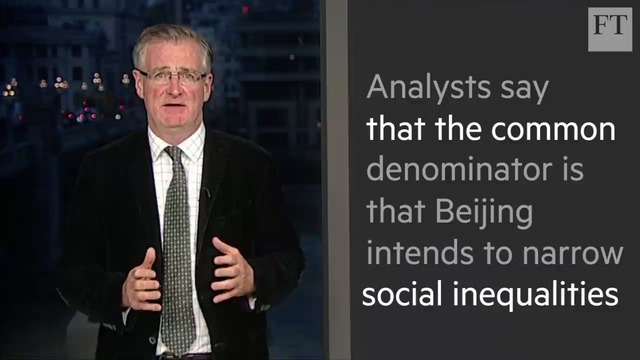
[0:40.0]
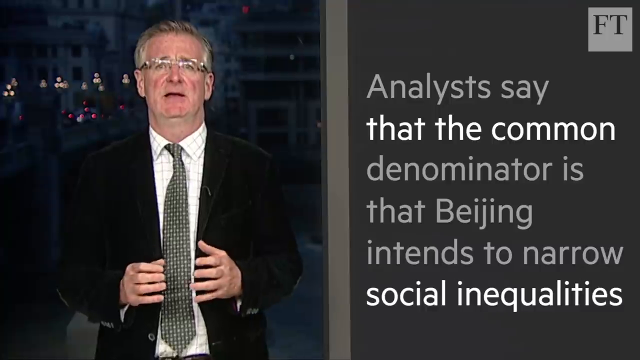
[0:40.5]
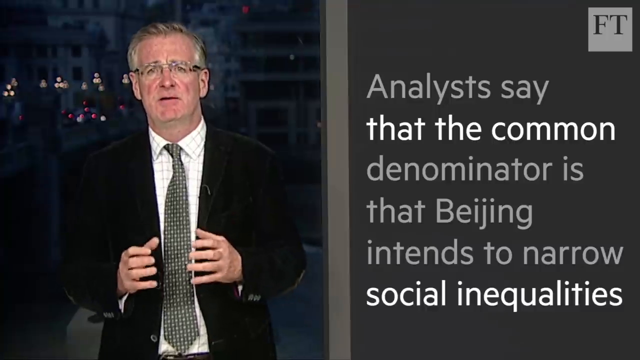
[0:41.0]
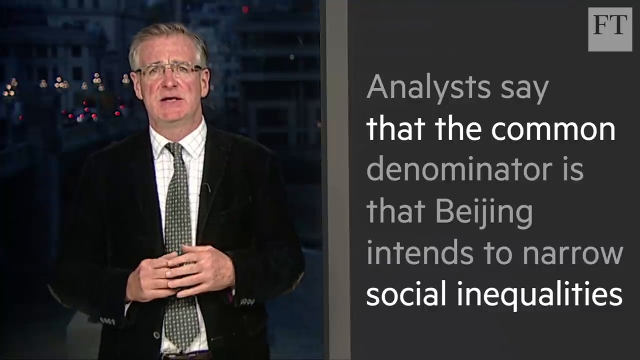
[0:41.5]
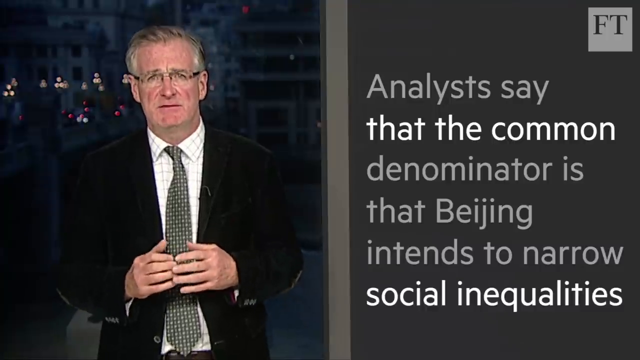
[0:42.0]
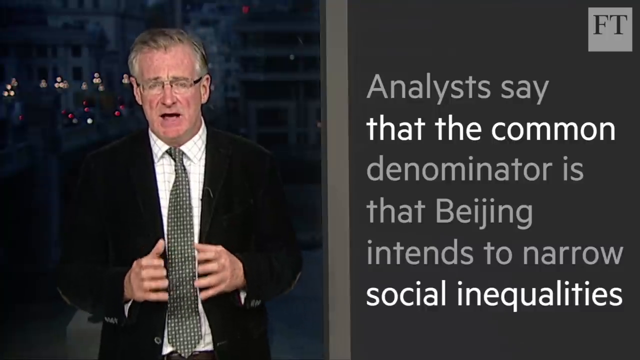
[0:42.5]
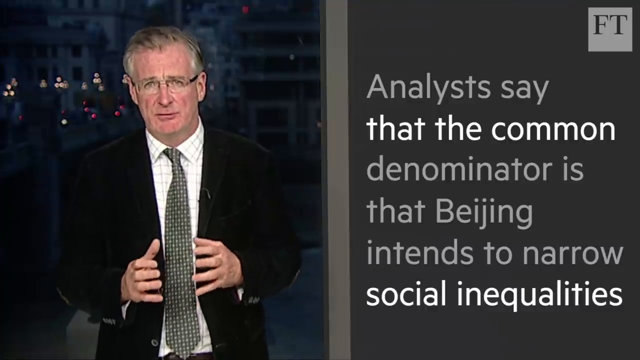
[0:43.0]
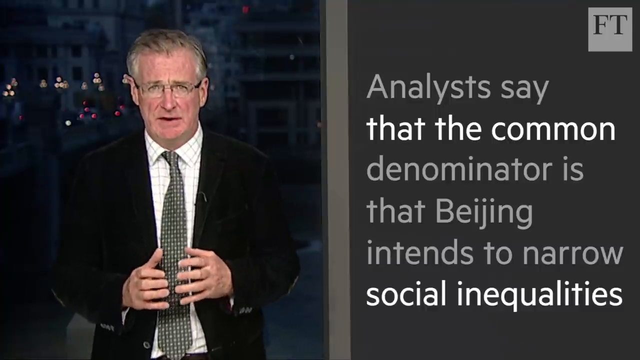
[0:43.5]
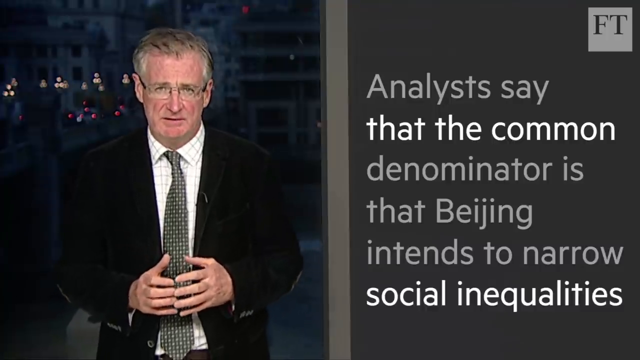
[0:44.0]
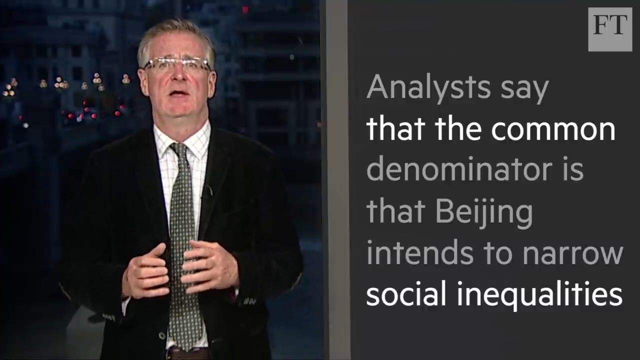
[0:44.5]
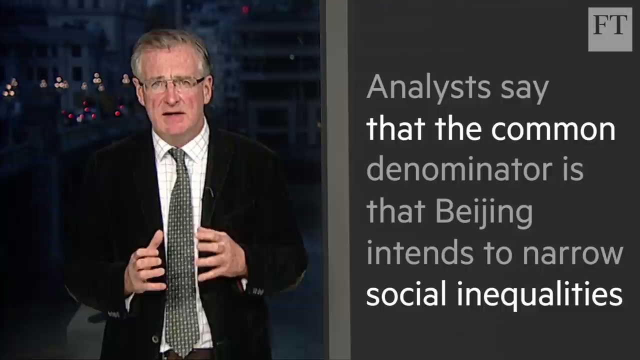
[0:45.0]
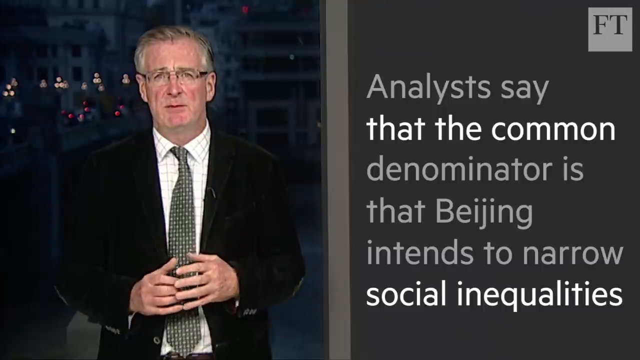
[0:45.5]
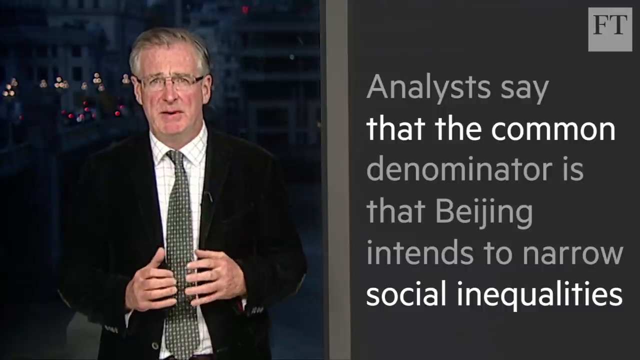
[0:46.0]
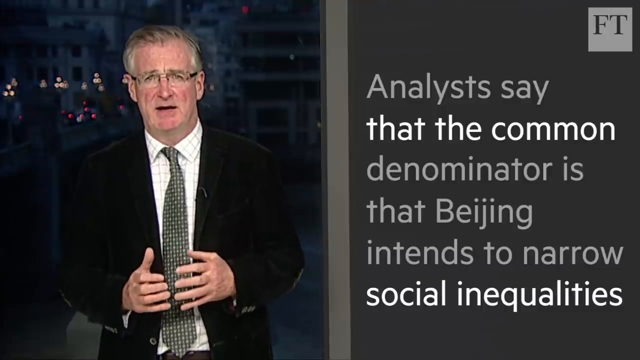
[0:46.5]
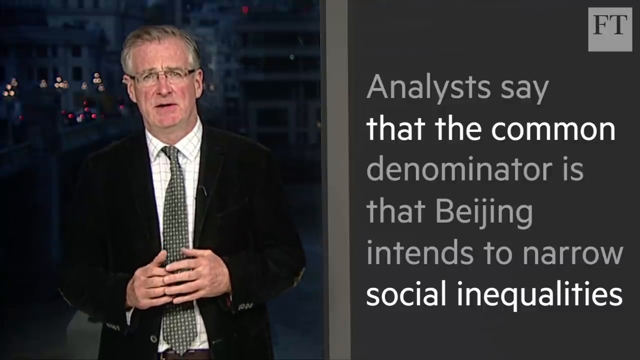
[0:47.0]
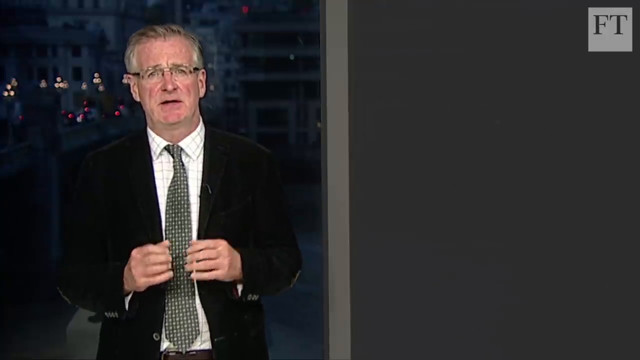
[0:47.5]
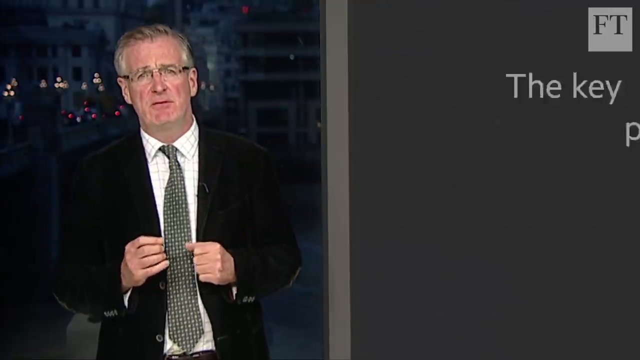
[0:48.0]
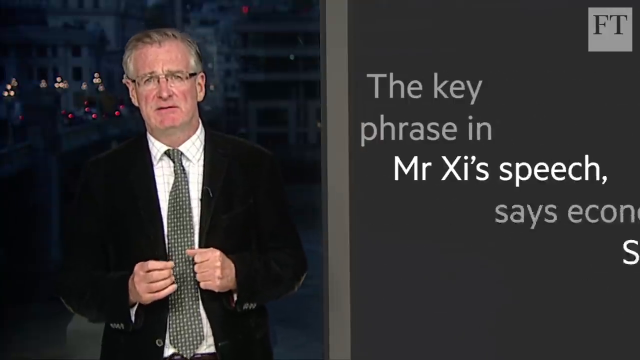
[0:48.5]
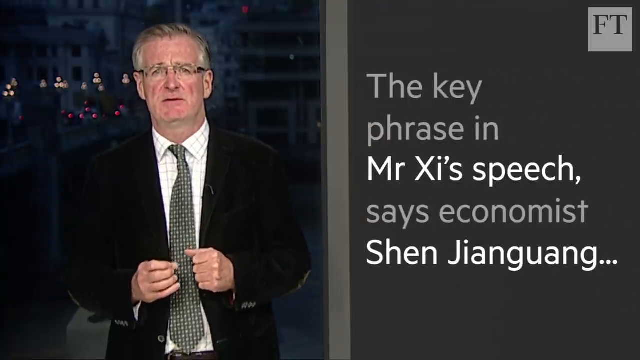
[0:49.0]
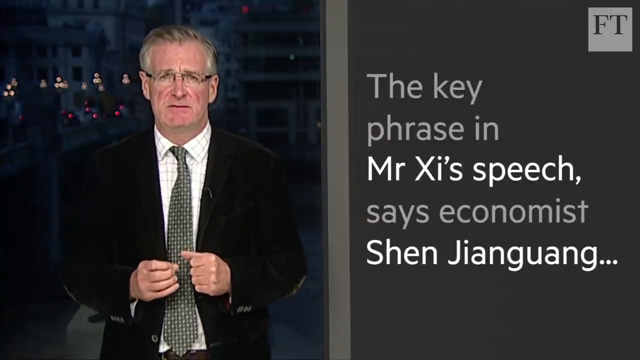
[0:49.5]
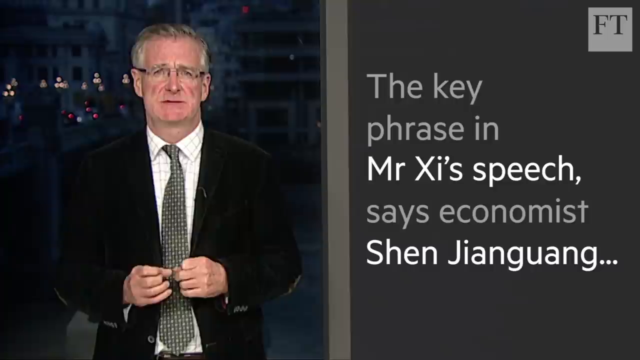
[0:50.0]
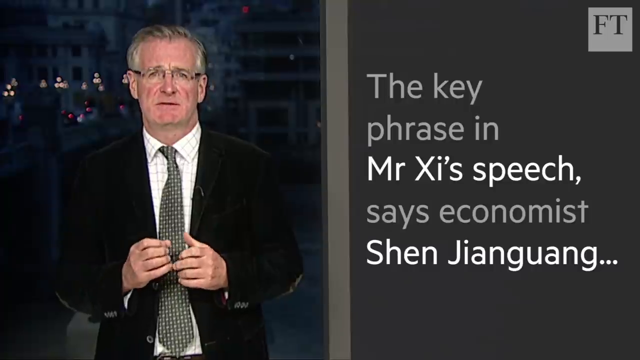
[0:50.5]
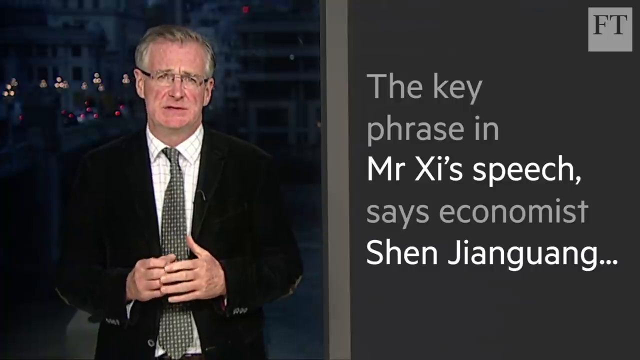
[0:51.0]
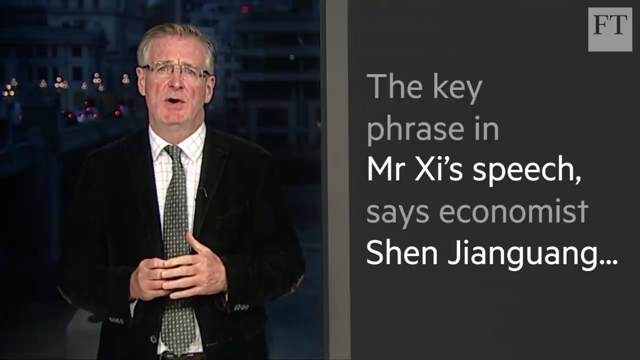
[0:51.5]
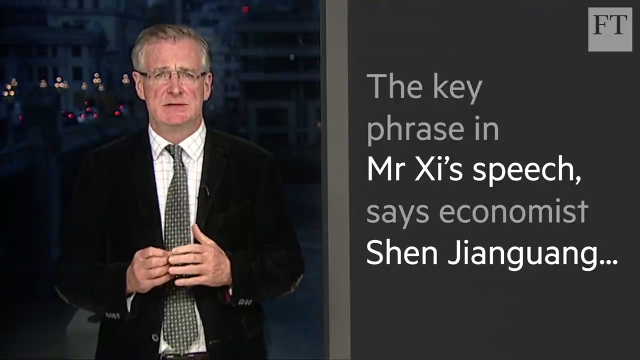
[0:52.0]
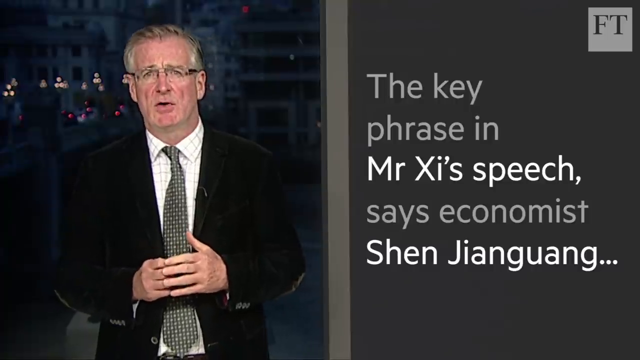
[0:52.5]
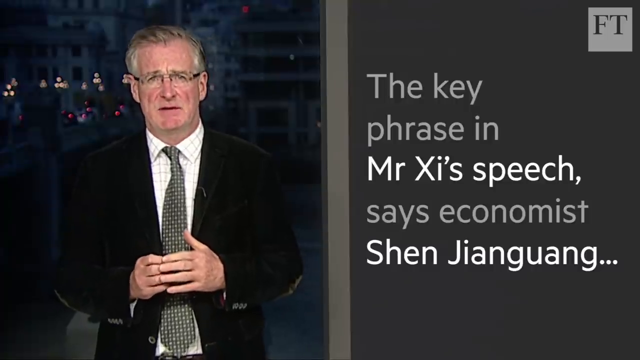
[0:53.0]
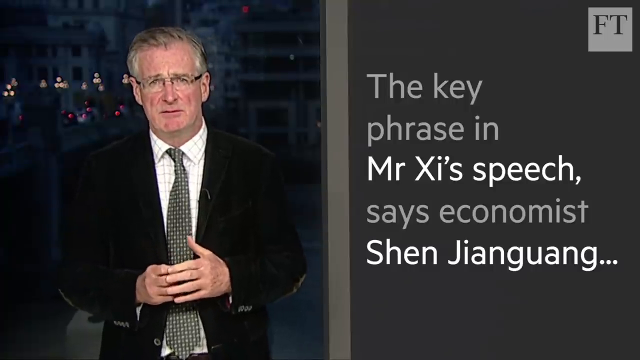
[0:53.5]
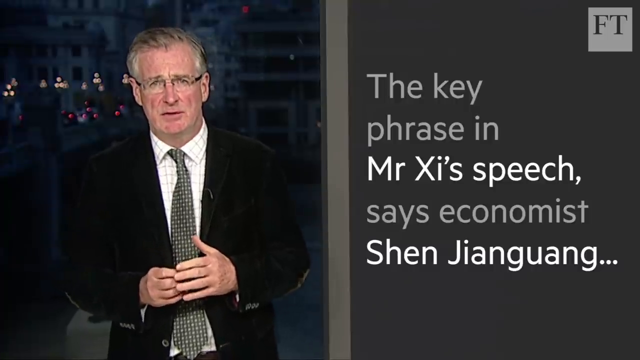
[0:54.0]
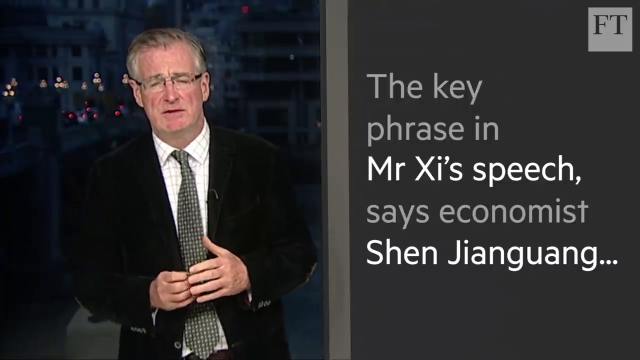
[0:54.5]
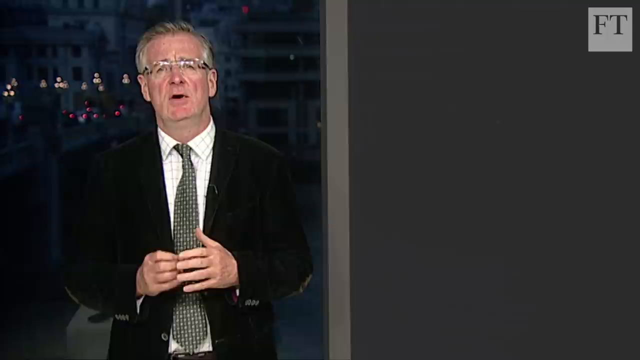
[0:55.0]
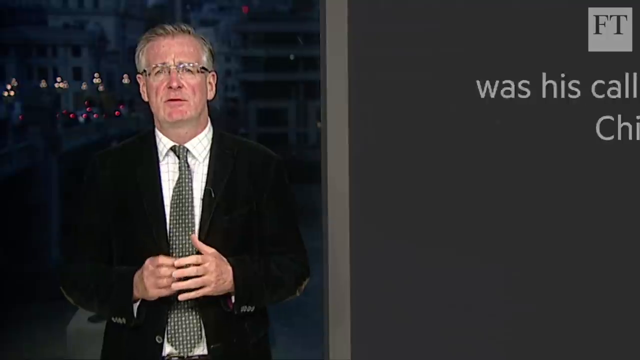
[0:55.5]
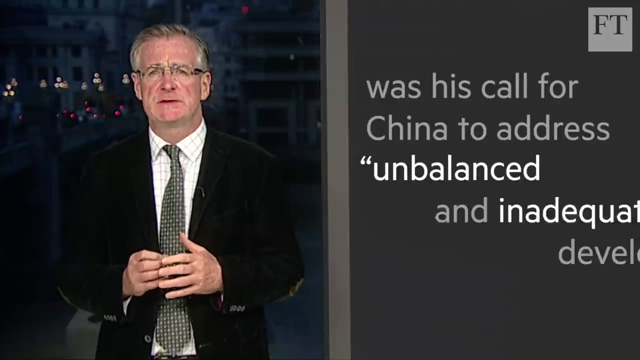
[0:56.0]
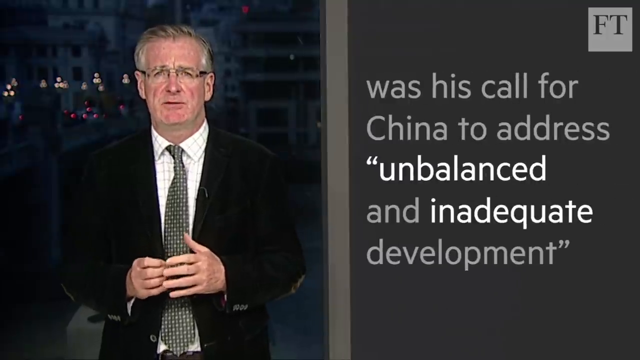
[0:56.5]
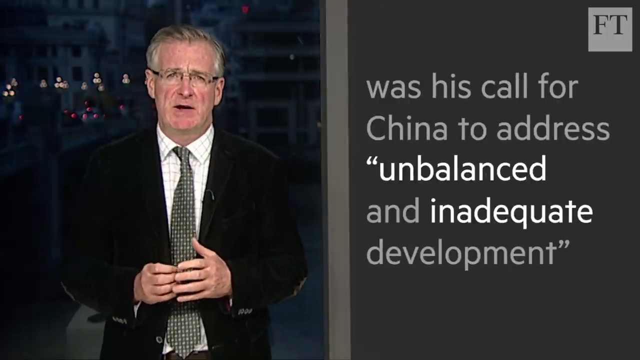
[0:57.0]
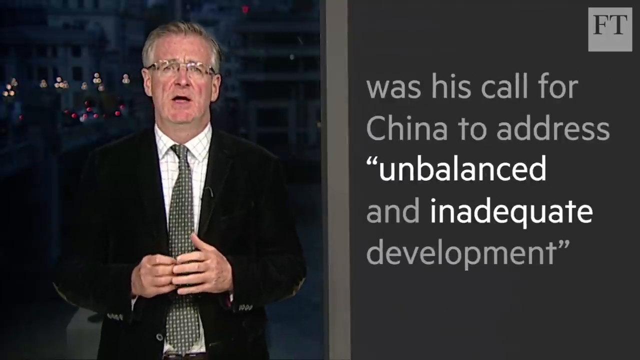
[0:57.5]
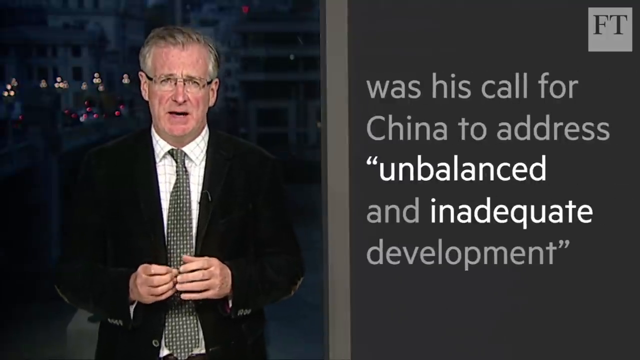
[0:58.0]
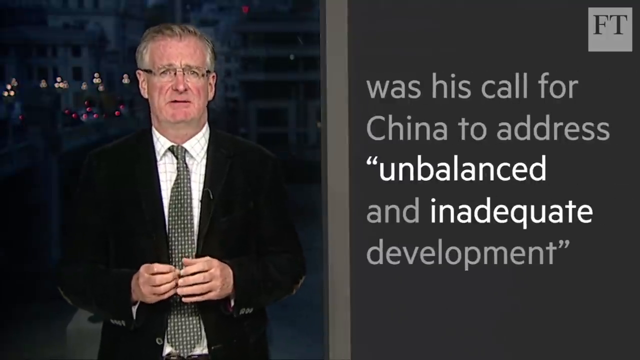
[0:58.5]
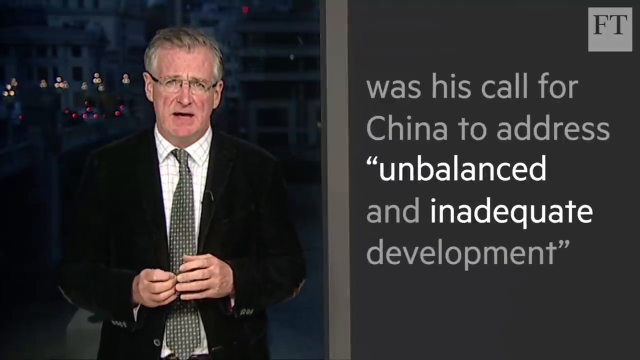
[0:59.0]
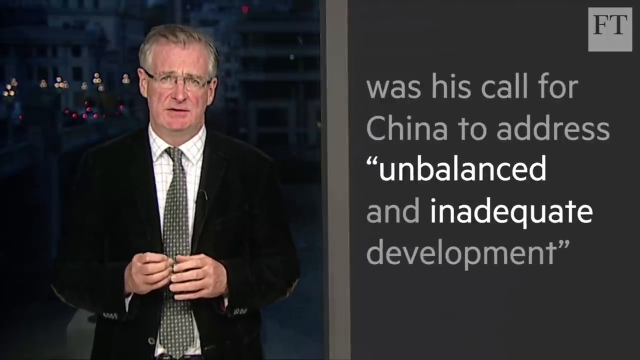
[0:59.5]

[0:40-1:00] The speaker stands on the left-hand side of the screen with graying hair, a dark jacket, a white check shirt and a gray patterned tie. He speaks directly to the camera, holding his hands in front of him for emphasis. Behind him, city buildings with some lights are dimly visible. On the right-hand side, against a dark gray background, the text reads "Analysts say that the common denominator is that Beijing intends to narrow social inequalities." The man speaks and emphasizes his words with his hands. The screen then changes to read "The key phrase in Mr. Xi's speech, says economist Shen Jianguang, was his call for China to address 'unbalanced and inadequate development.'" with "unbalanced and inadequate development" in quotes. In the upper right of the right side of the screen, the initials "FT" appear in dark gray in a lighter gray square.